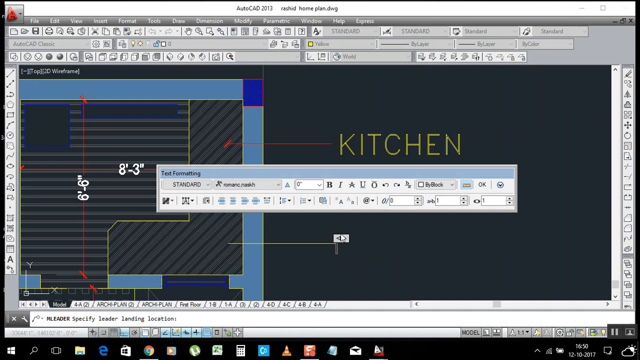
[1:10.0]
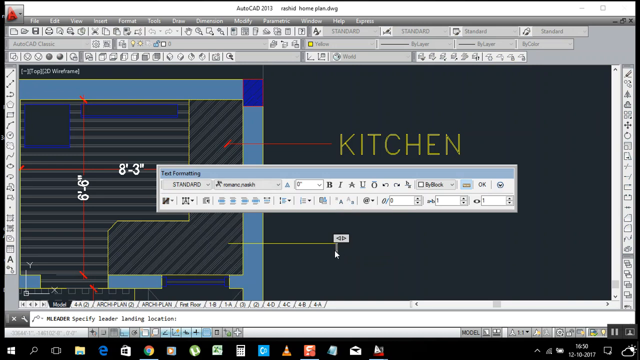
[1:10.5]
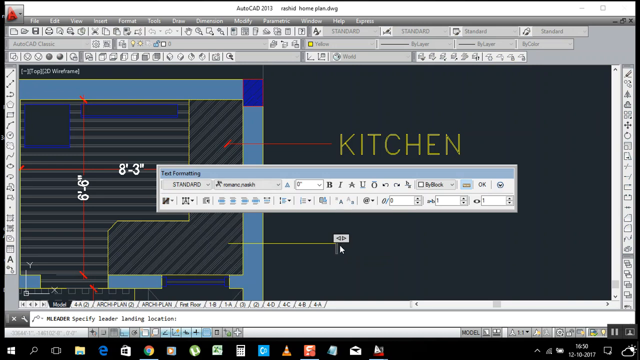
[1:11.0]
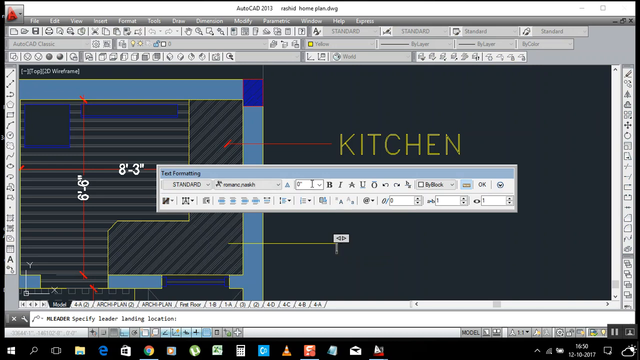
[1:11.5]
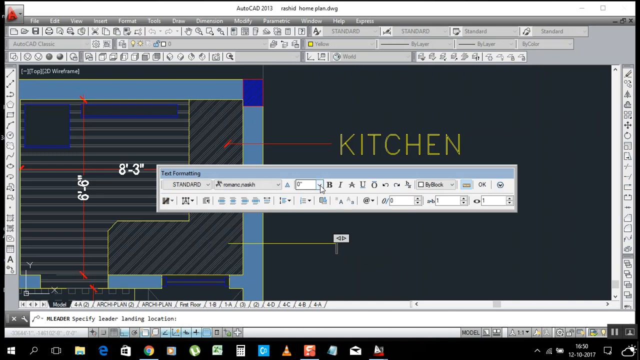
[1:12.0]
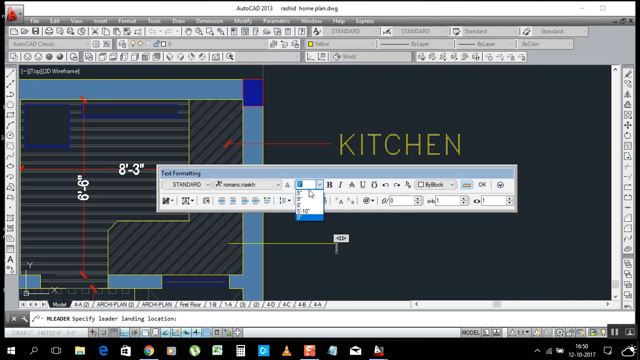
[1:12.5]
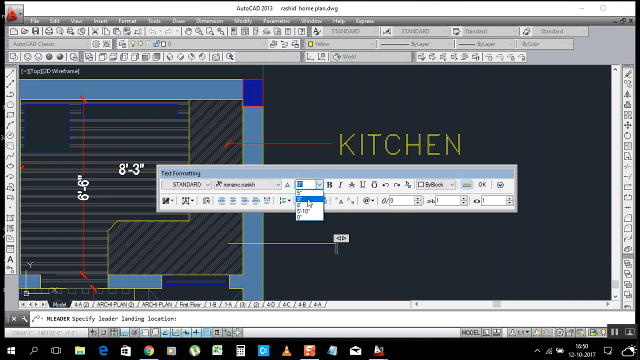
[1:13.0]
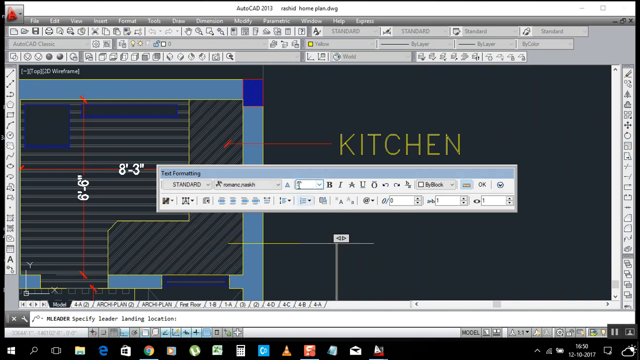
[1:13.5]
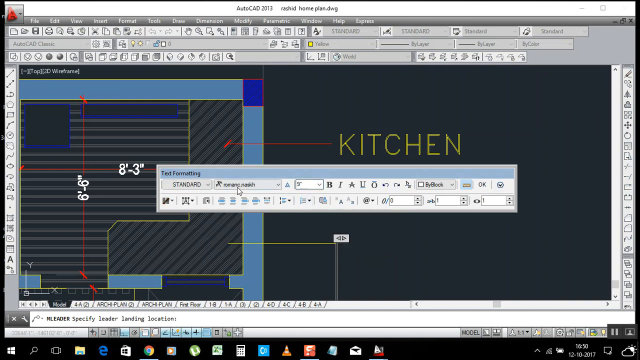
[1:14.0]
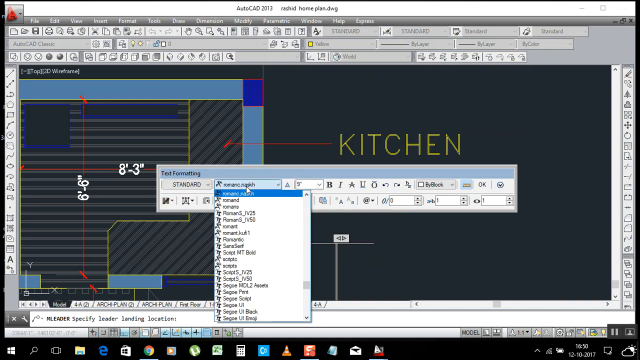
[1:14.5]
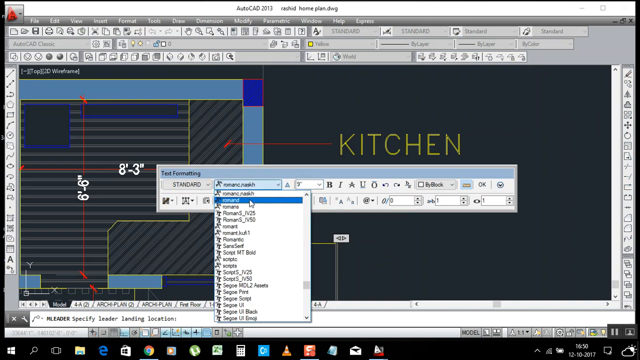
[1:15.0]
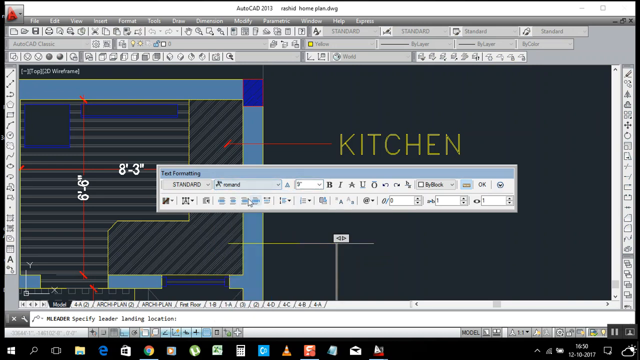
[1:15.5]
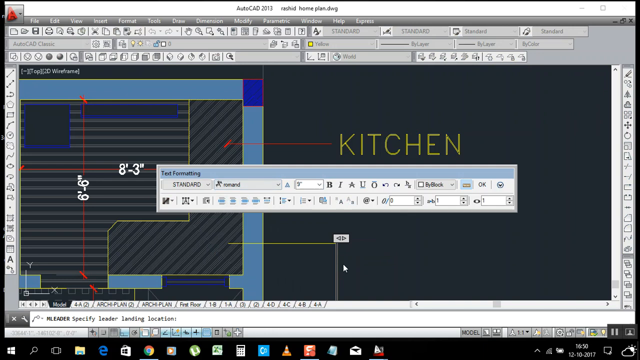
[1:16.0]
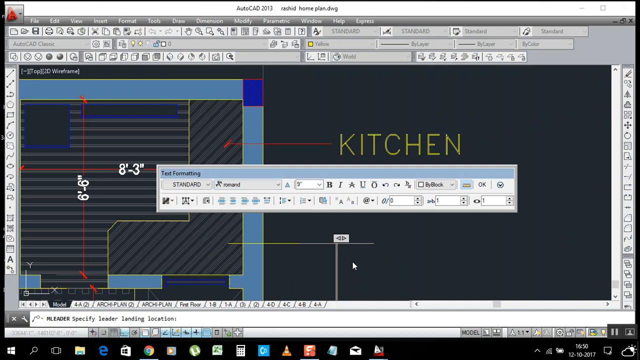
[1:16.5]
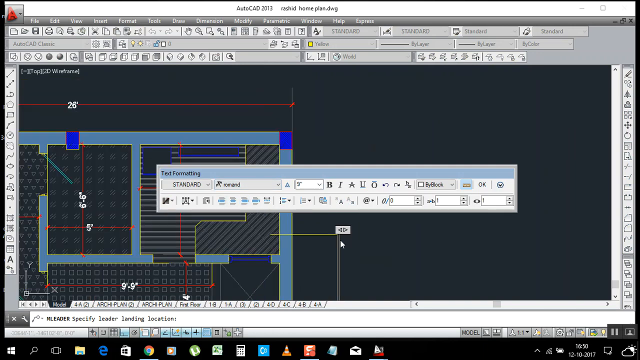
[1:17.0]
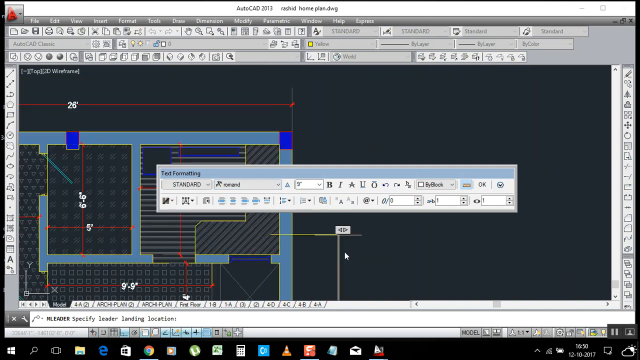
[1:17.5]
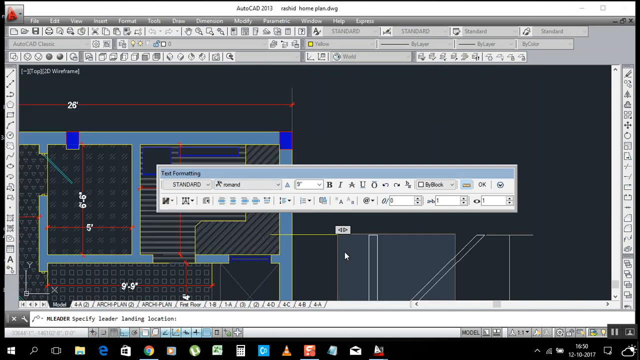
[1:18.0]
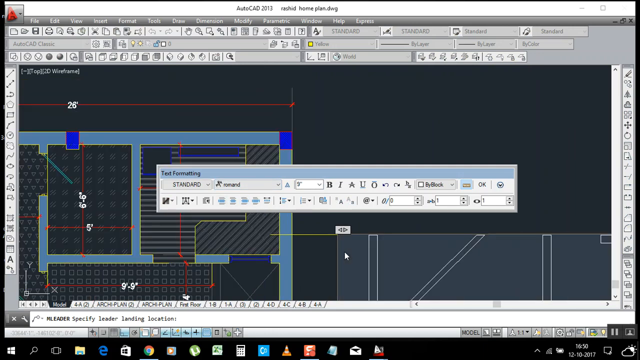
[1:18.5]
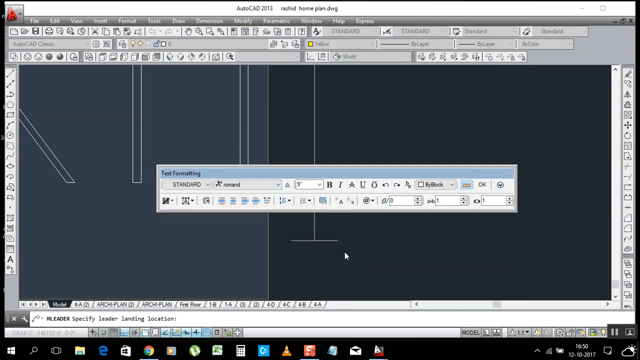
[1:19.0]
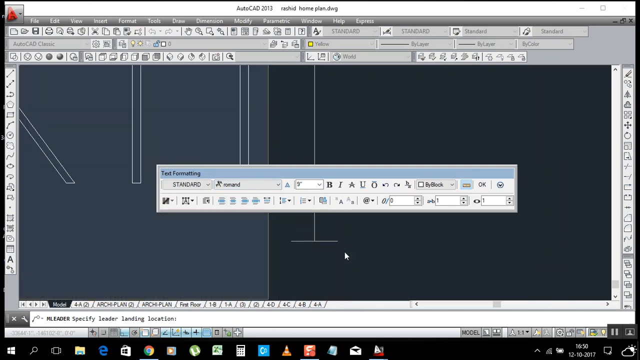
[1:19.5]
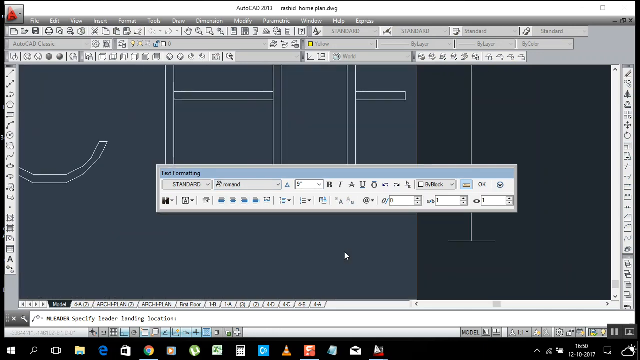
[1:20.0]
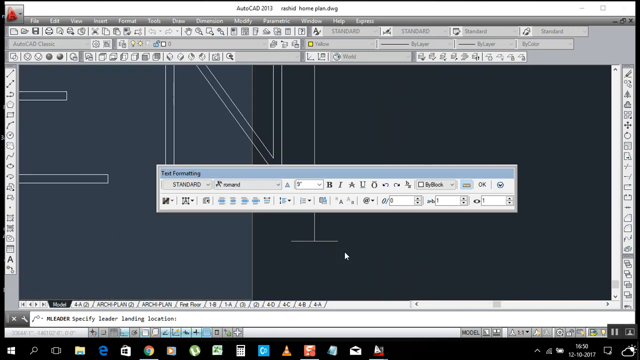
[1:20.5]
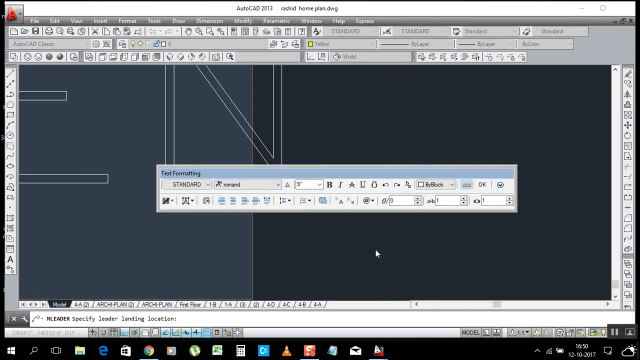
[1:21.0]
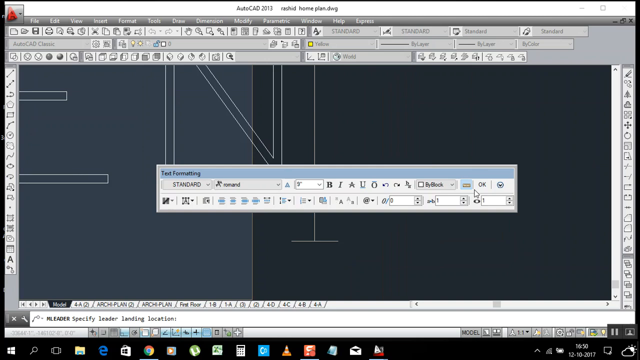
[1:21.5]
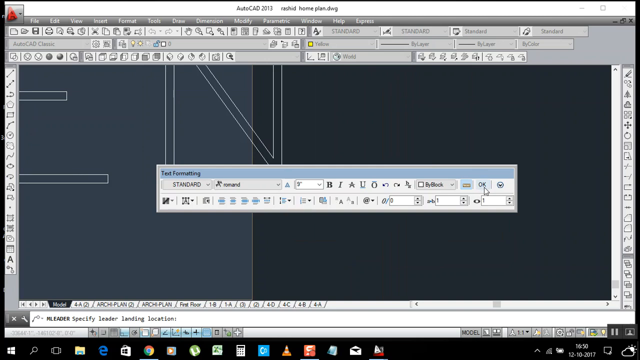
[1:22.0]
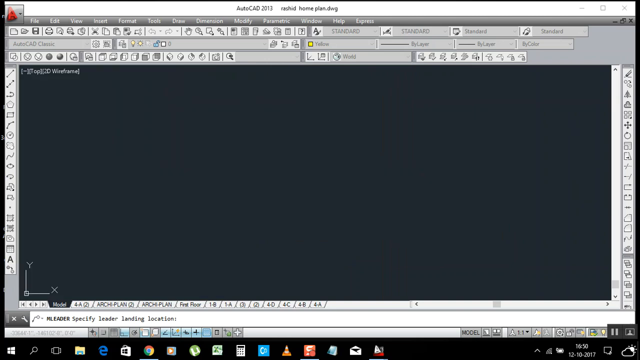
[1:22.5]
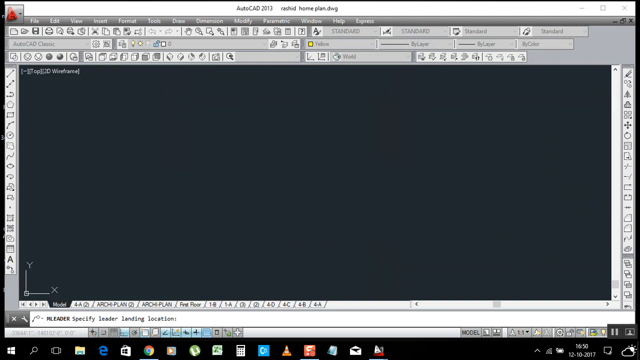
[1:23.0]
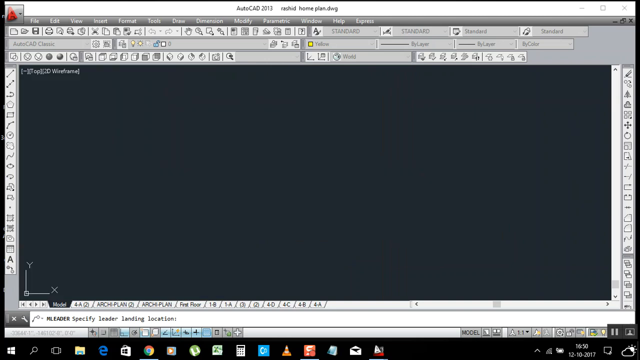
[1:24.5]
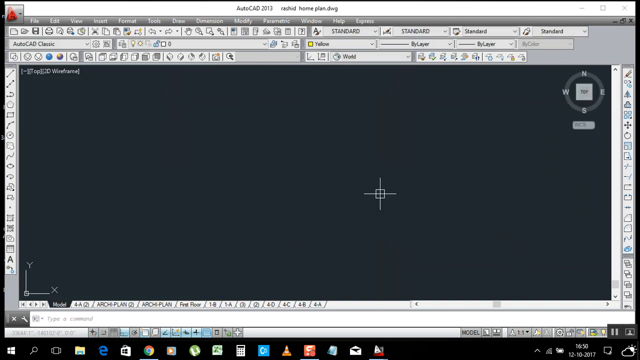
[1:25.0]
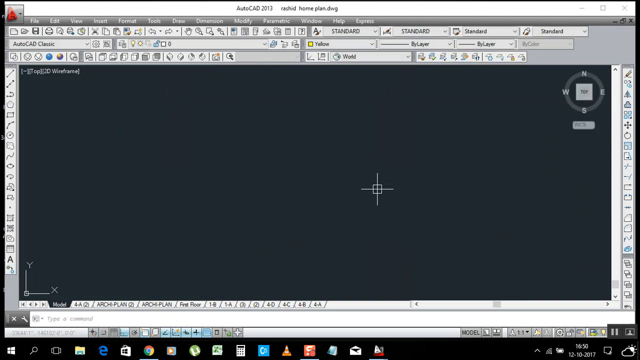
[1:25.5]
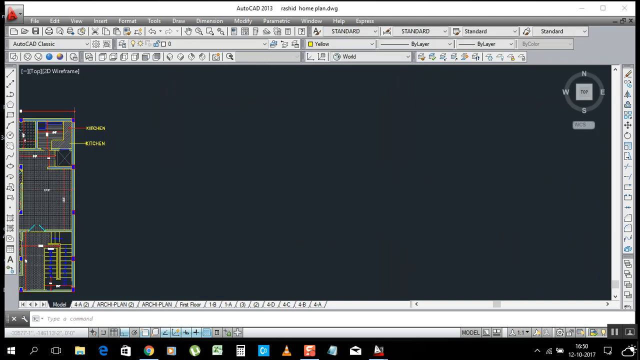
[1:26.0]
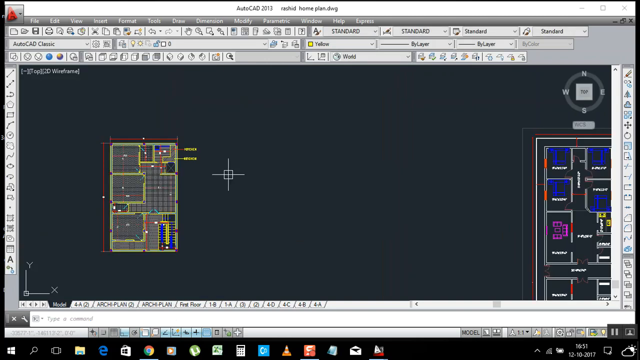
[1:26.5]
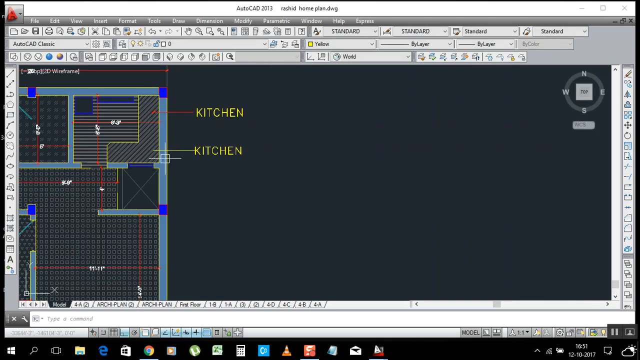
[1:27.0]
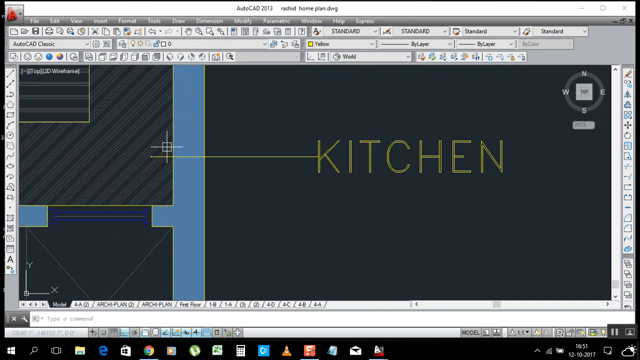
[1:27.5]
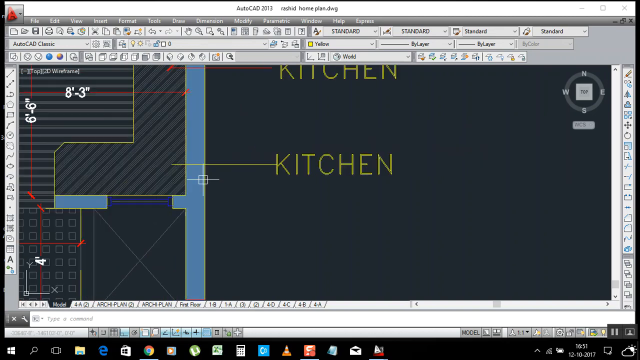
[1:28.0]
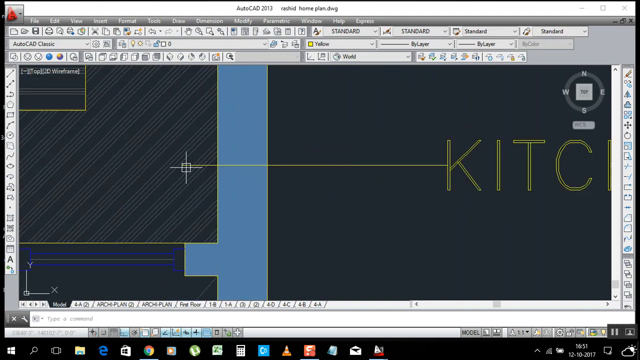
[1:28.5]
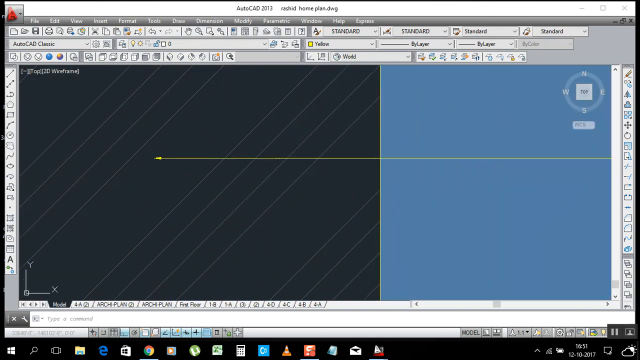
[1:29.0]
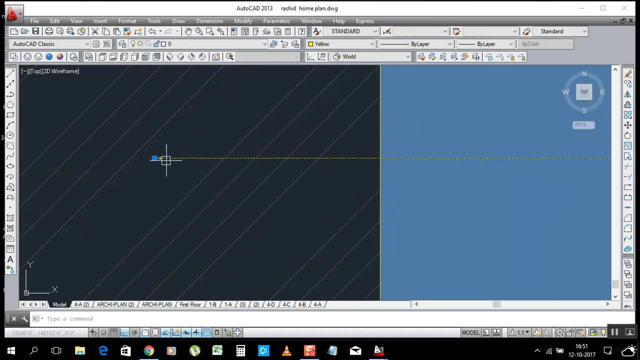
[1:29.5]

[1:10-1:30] The Text option is selected again and the Text Formatting dialog is visible again. The font height appears to be chosen, then the font type. Text is typed again, apparently the word kitchen, but in very large text that does not fit on the screen; only maybe a third of each letter is visible, in a light gray outline font. The diagram window goes black, and the view zooms way out. It then zooms back in, showing the newly typed word kitchen in yellow with its own yellow line drawn to it. While zoomed out, the CAD drawing is visible in its entirety.